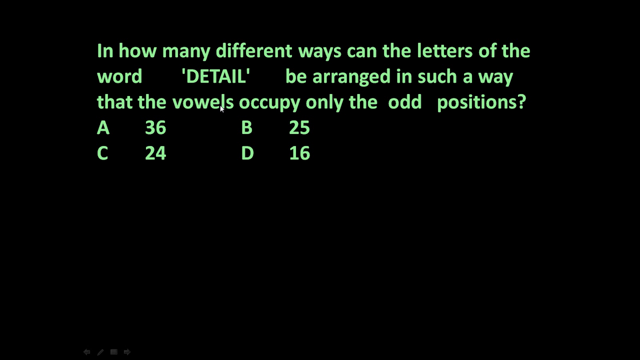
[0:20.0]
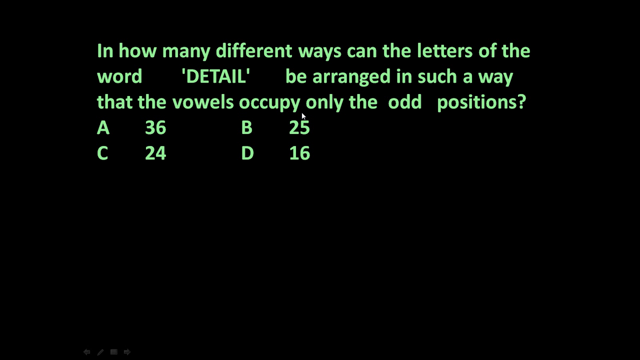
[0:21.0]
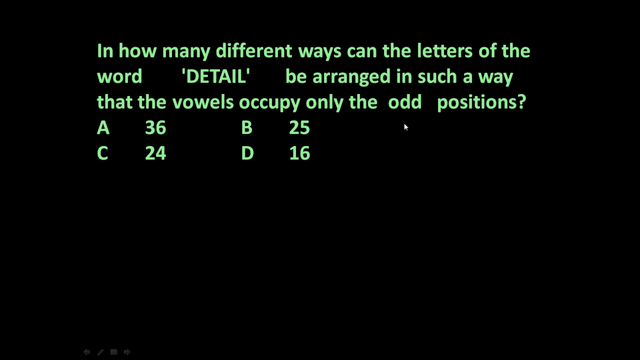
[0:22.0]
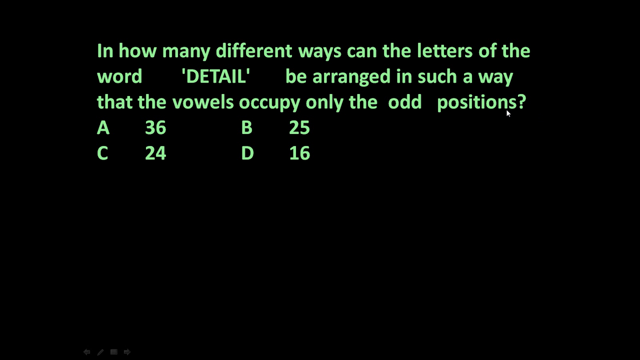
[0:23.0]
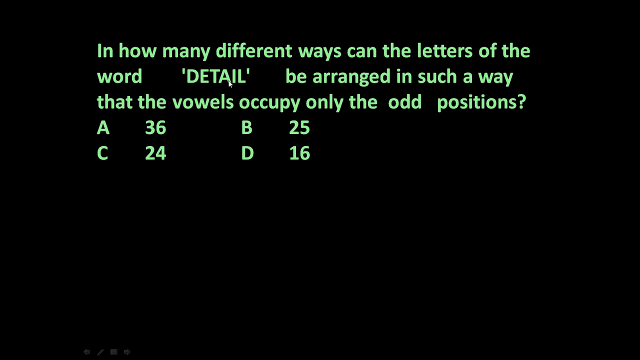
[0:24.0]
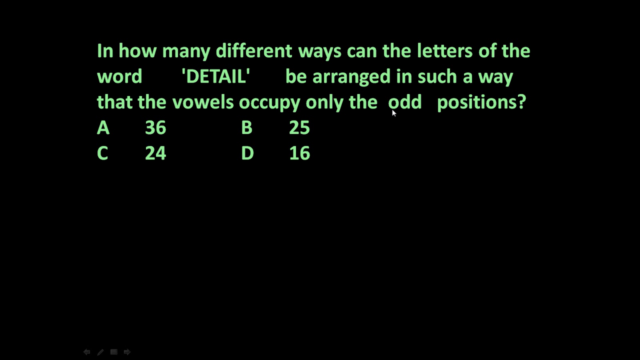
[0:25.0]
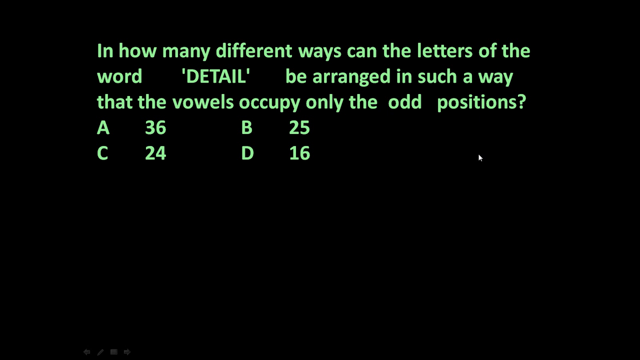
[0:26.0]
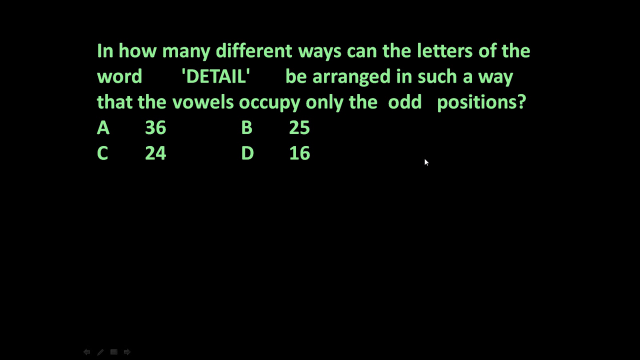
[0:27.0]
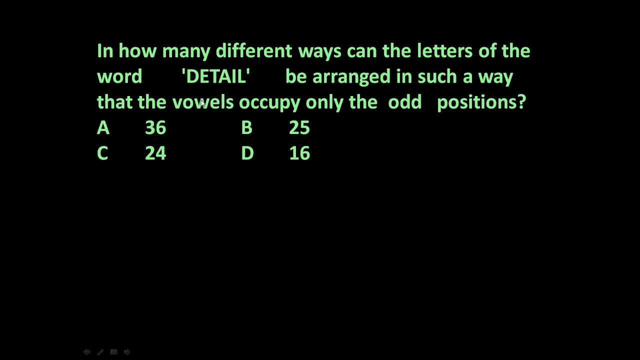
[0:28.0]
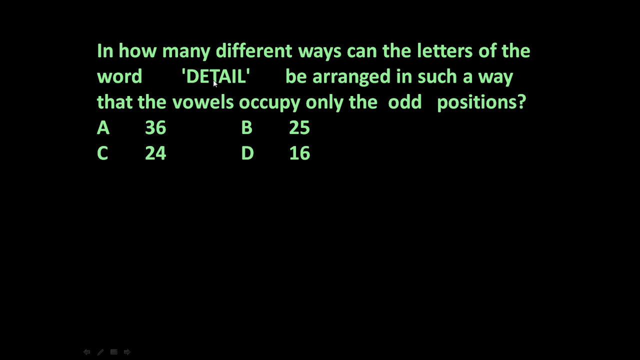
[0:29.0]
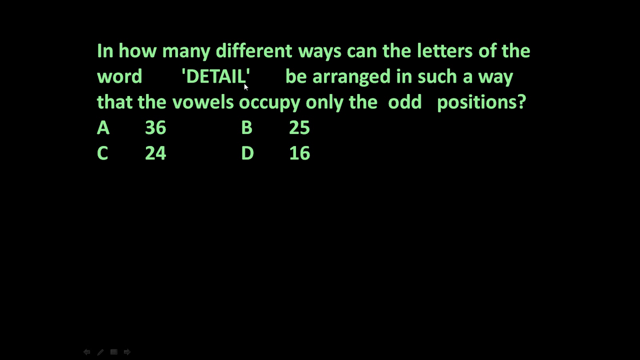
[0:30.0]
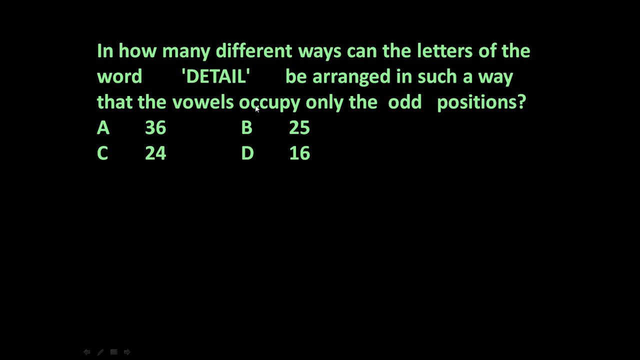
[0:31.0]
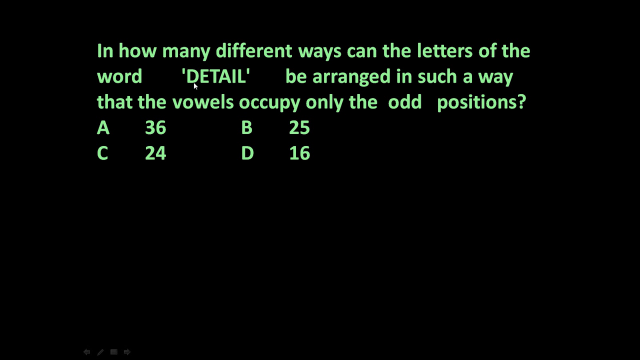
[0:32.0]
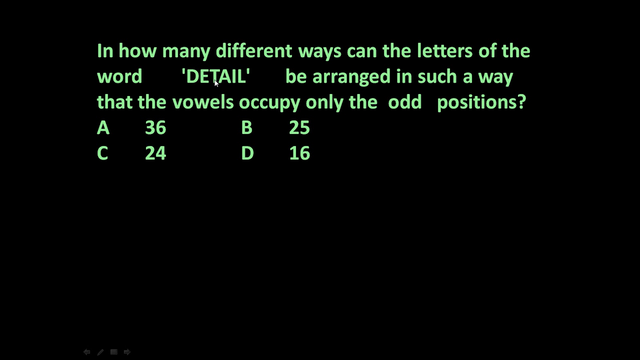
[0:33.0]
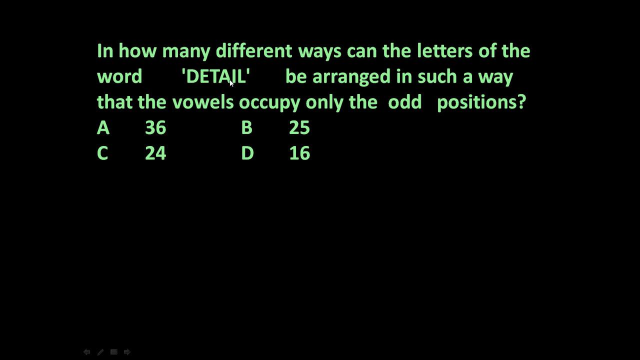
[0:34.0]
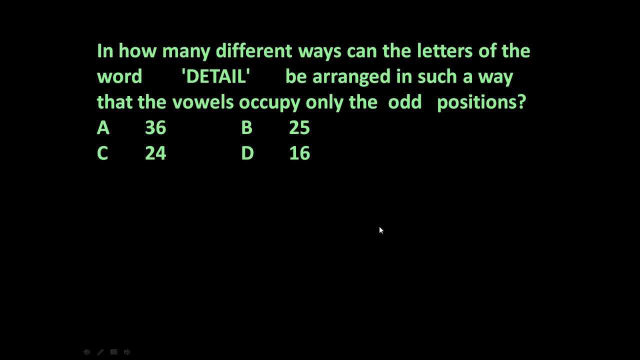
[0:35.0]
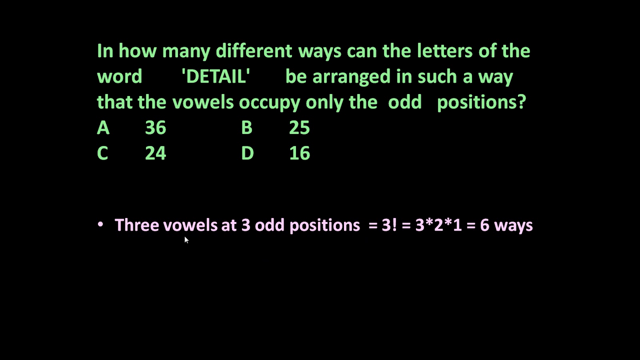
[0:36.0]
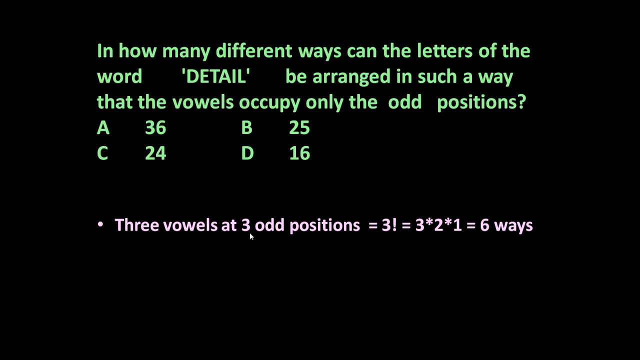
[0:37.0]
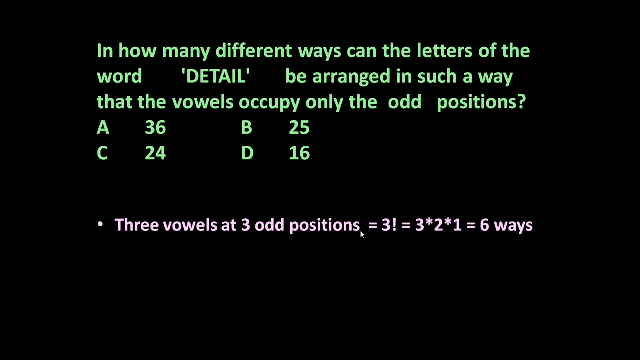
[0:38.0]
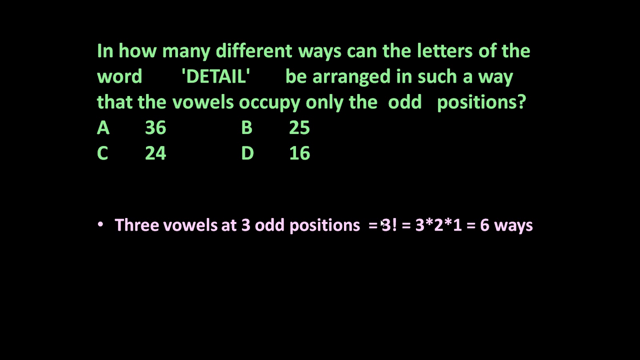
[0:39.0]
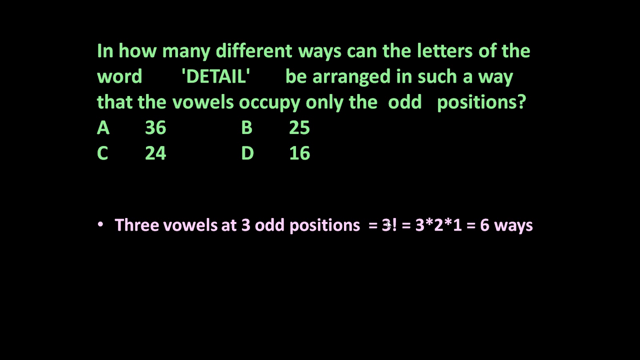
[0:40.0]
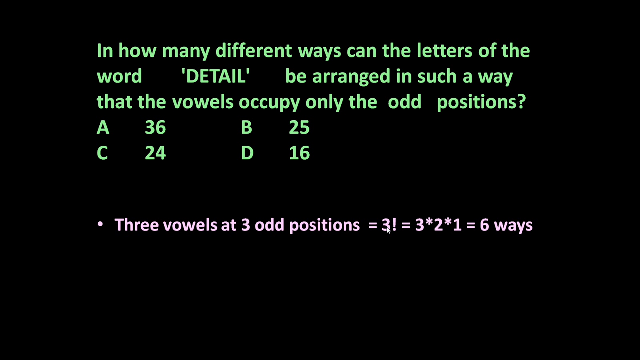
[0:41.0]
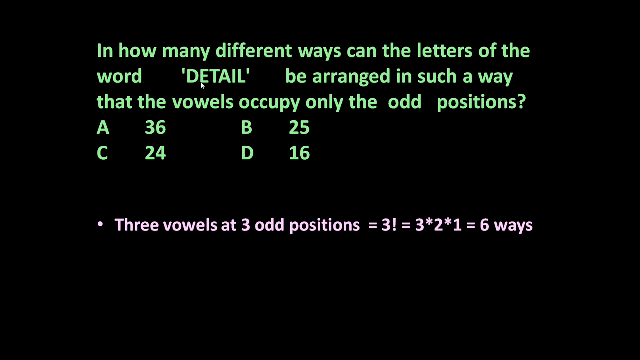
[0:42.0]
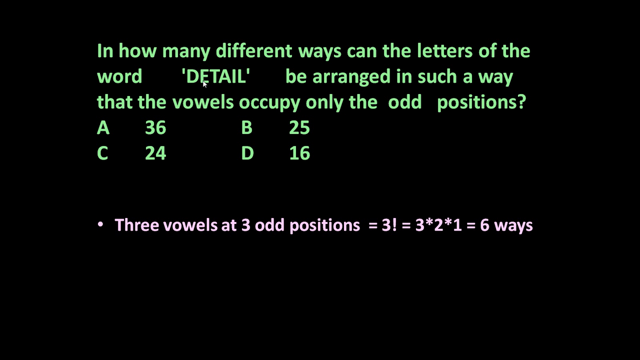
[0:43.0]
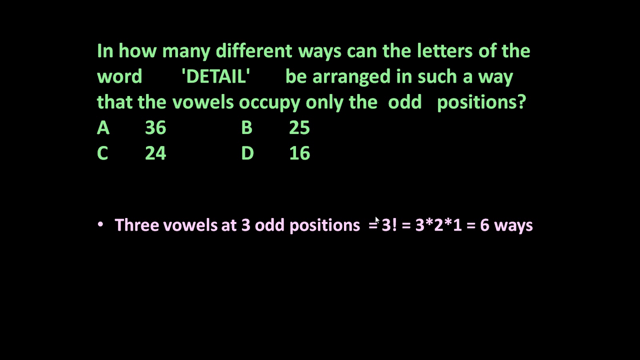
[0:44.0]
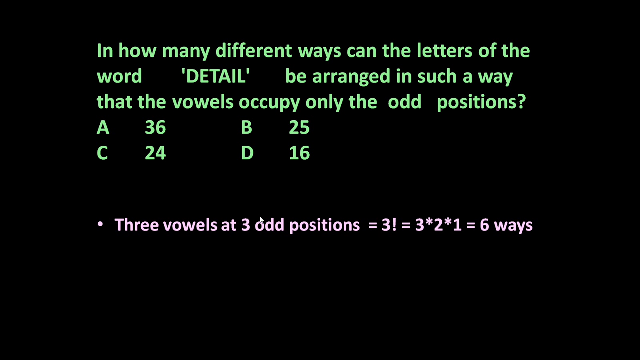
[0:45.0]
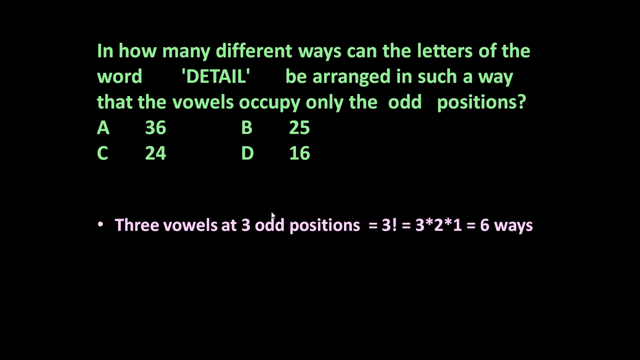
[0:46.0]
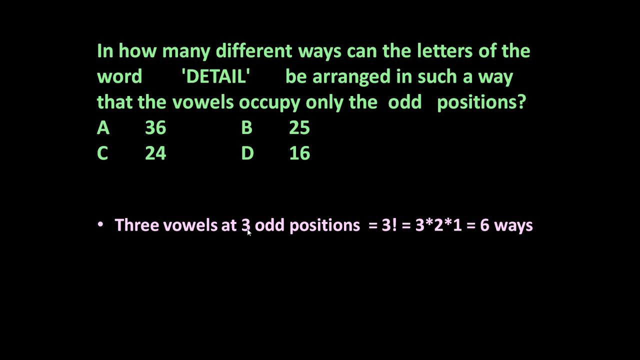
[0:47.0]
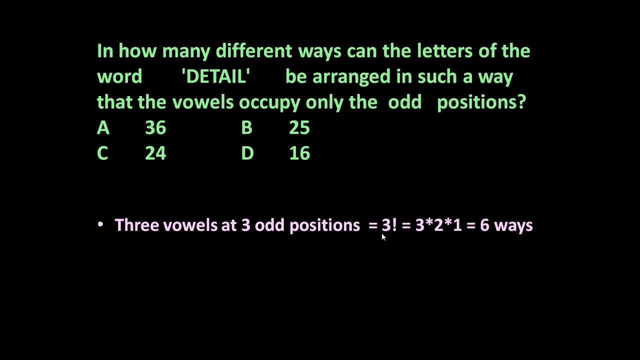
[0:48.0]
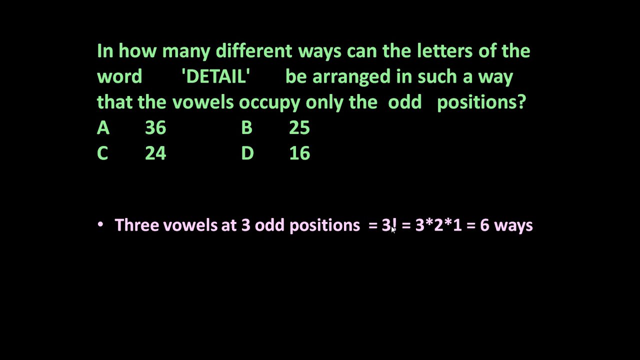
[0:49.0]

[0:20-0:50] On a dark black background, bright green text reads "in how many different ways can the letters of the word DETAIL be arranged in such a way that the vowels occupy only the odd positions?" The word DETAIL is in all caps and set off with a single quotation mark on each side. Below, in capital letters, are four possible answers: "A 36" and "B 25" on one line, then "C 24" and "D 16" on the line below. A cursor appears and moves around the screen, highlights the word DETAIL, and draws a line underneath it. Then, at the bottom, a white bullet point pops up reading "three vowels at three odd positions equals three! equals three*two*one* equals six ways."